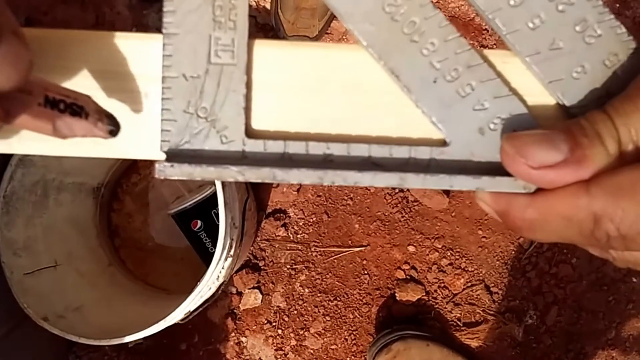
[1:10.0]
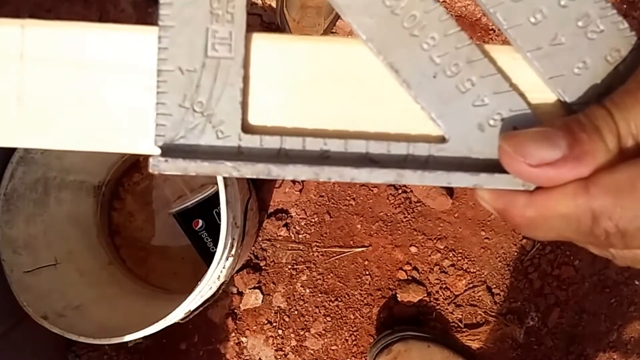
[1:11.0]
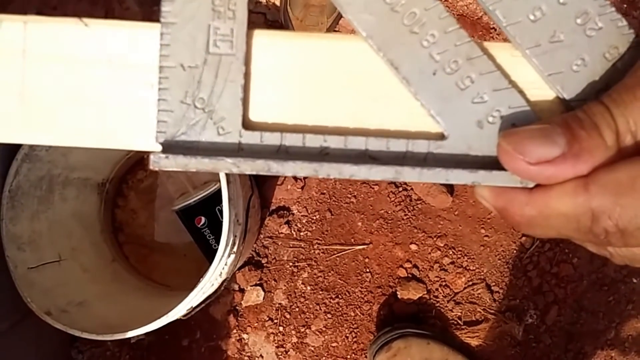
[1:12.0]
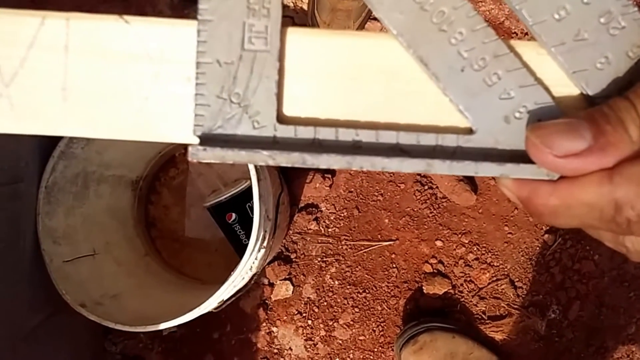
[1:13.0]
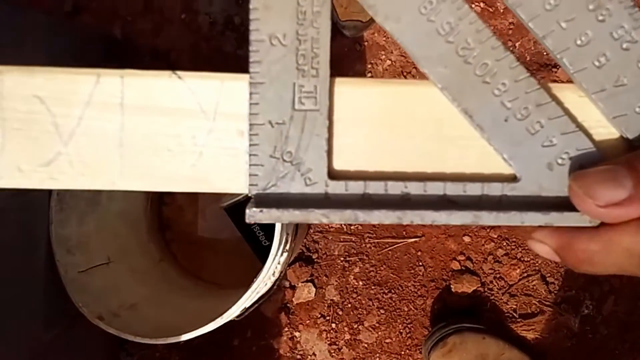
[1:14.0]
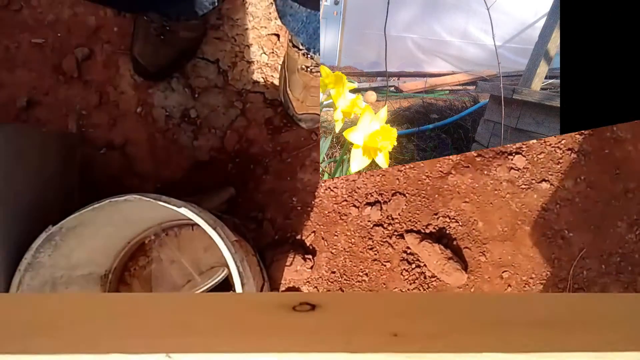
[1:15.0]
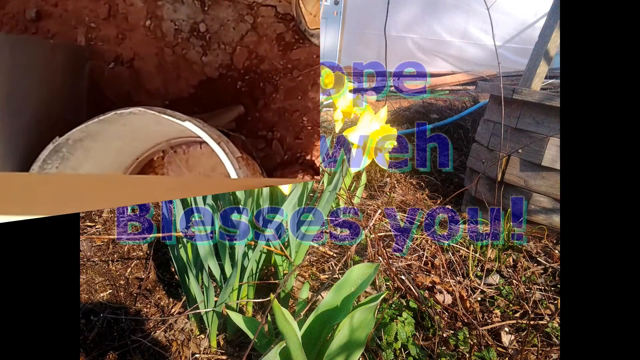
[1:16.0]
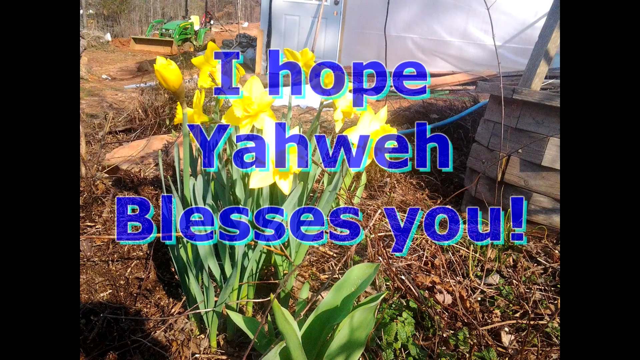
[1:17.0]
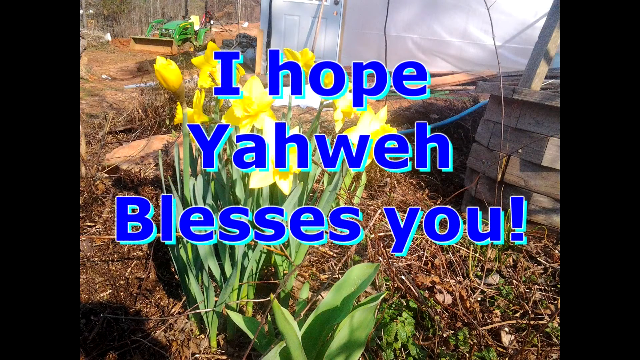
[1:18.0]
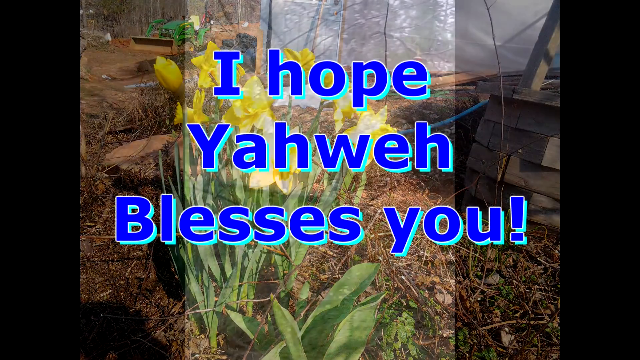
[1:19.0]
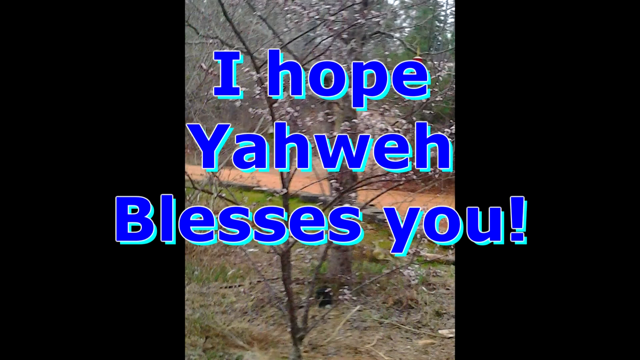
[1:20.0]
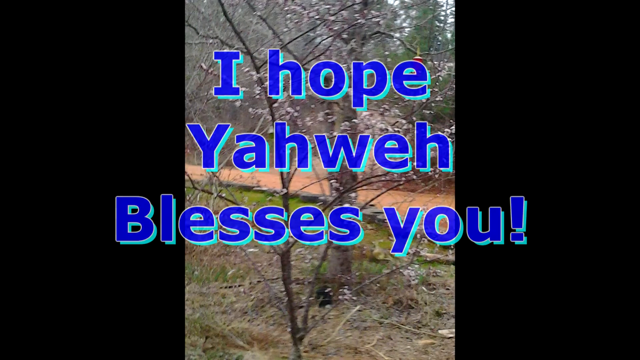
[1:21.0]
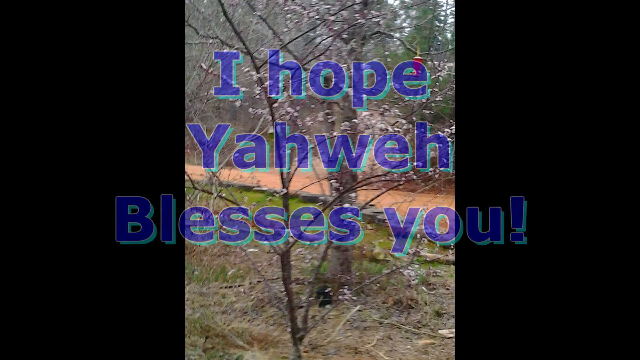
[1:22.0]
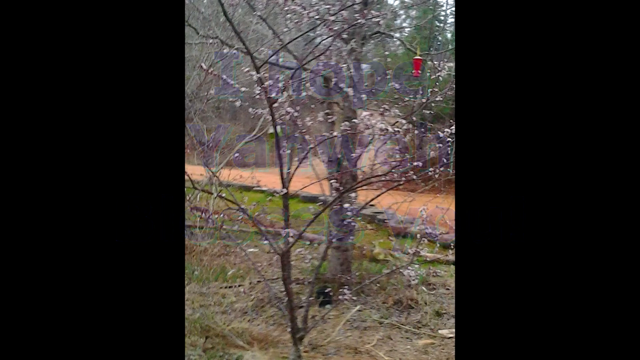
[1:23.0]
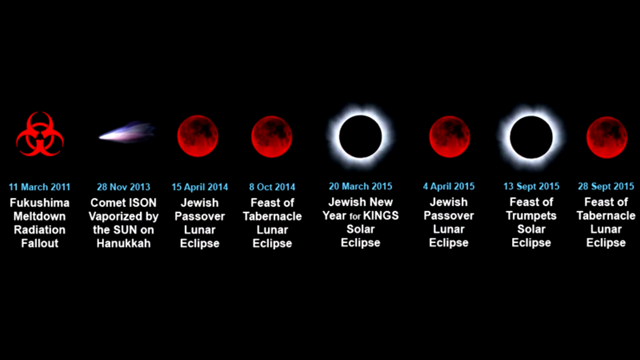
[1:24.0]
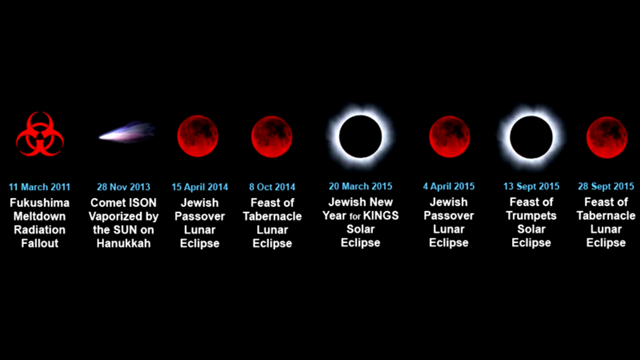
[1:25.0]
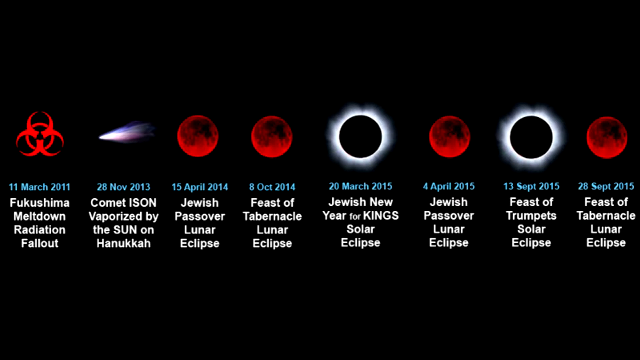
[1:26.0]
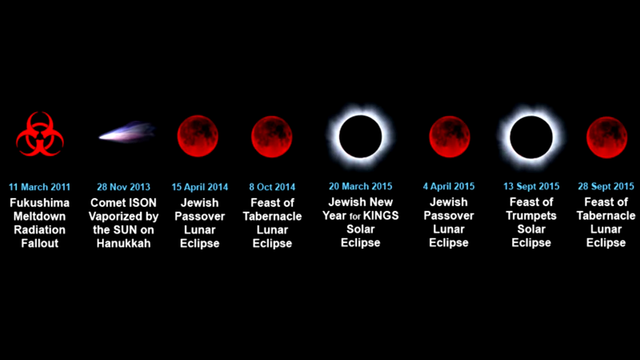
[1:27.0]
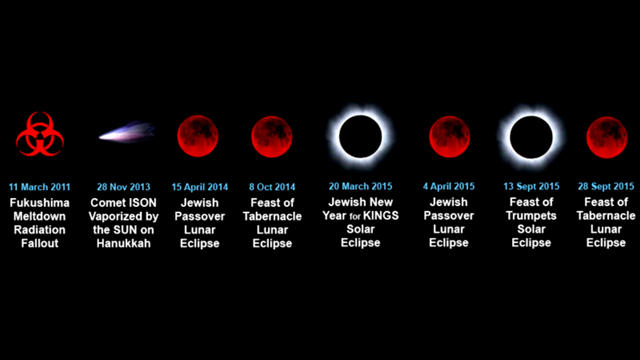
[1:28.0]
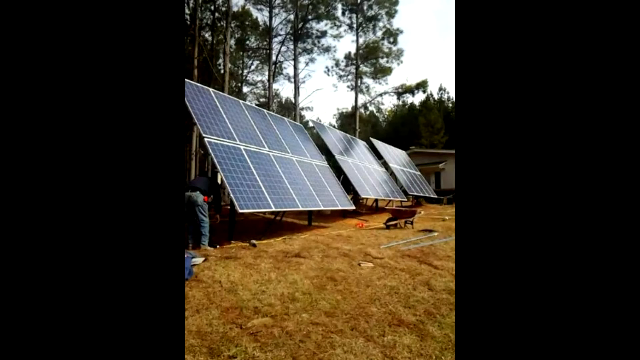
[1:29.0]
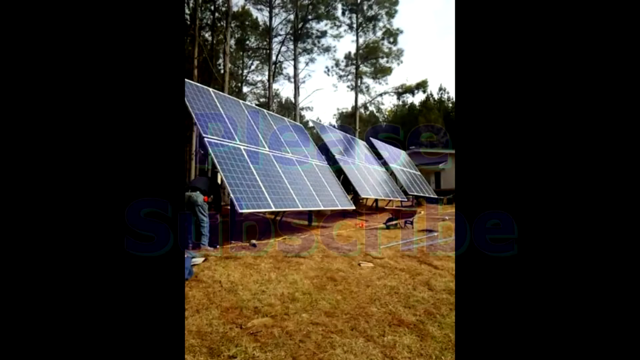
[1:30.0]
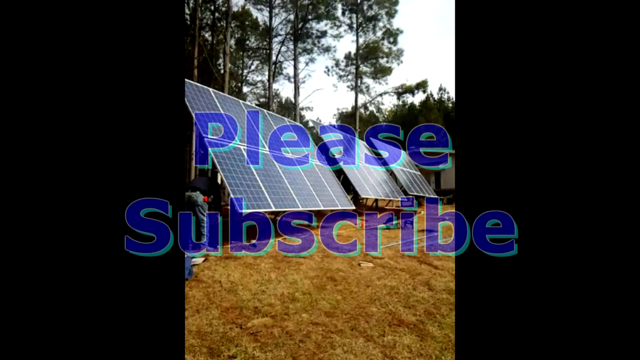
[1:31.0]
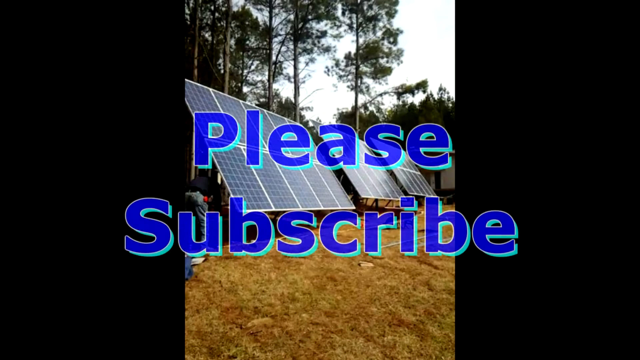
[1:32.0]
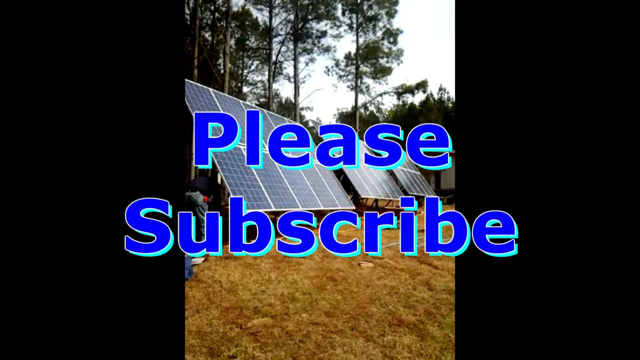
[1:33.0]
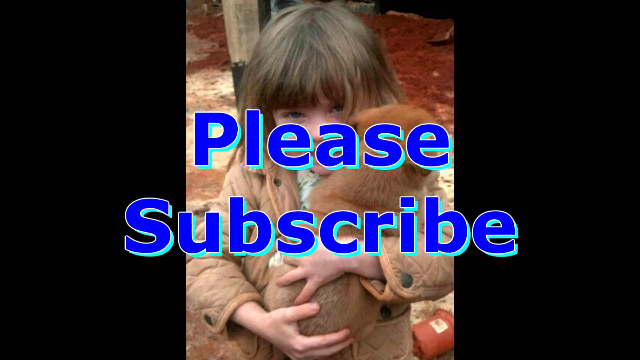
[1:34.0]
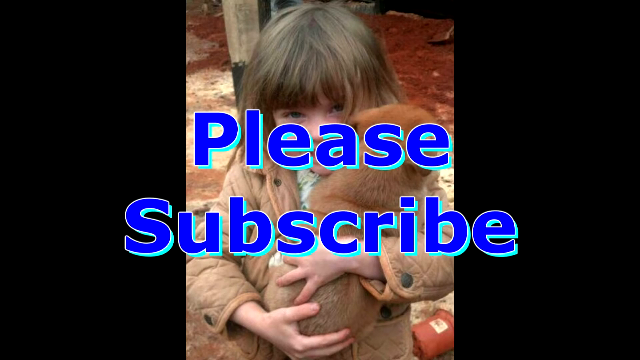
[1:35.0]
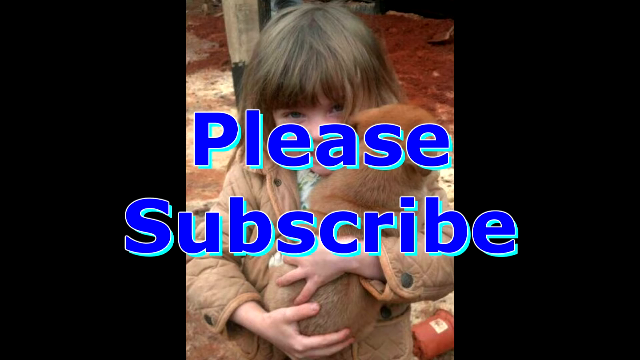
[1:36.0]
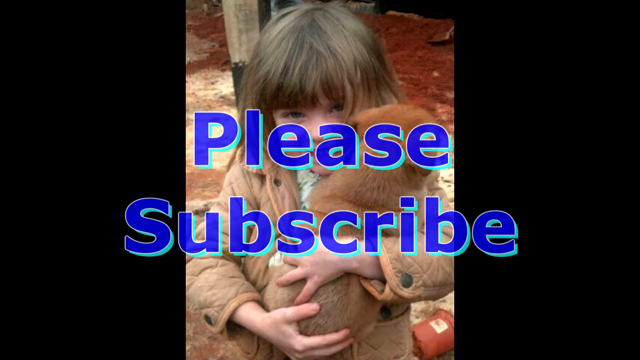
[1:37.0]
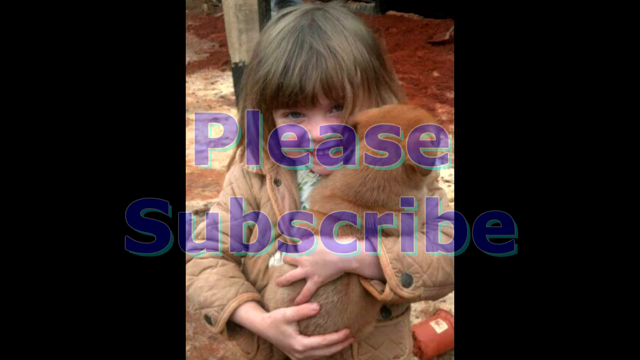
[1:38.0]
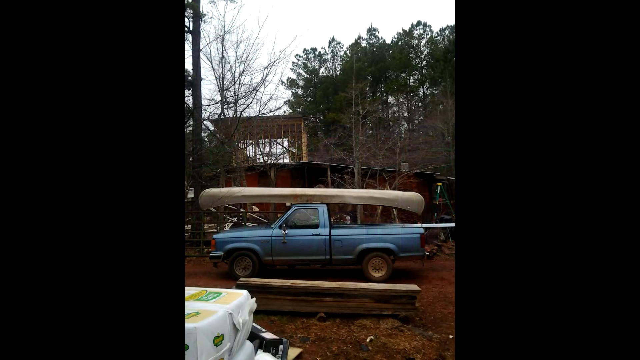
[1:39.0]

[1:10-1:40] The man holds the metal ruler with his left hand, balancing it on the wooden block, and holds a brown wooden pencil in his right hand. The pencil's tip is black, with what looks like branding in black text on it. He draws lines, and the sun reflects on the wooden block, where the shadow of his hand and the pencil falls. What looks like Pepsi and a takeaway container are visible. The man's boots show up in the top middle of the frame as he draws horizontal lines in the direction of where he is standing. He adjusts the ruler, and the scene fades into an image of what looks like a yard, with machinery in the top left corner, what looks like a water well on the right-hand side, and a white door at the top middle against a white backdrop. Another image shows what looks like a plant with yellow flowers. An image of a tree follows, then a shot of what looks like planets and solar systems, and the text "please subscribe". A little girl holding a dog appears, and then a cloud appears.